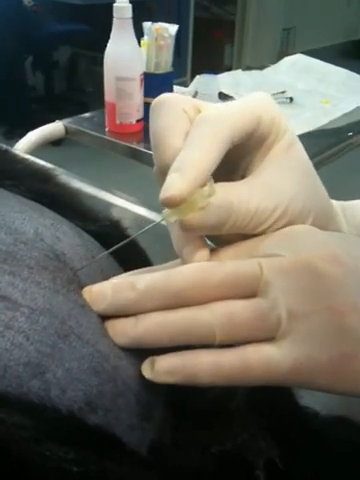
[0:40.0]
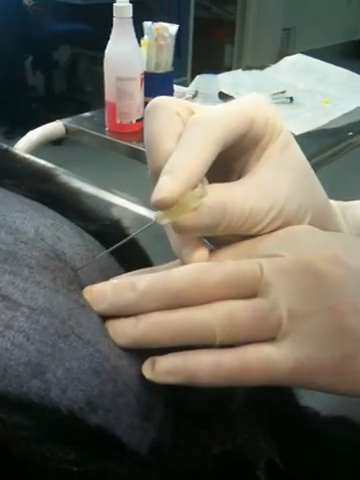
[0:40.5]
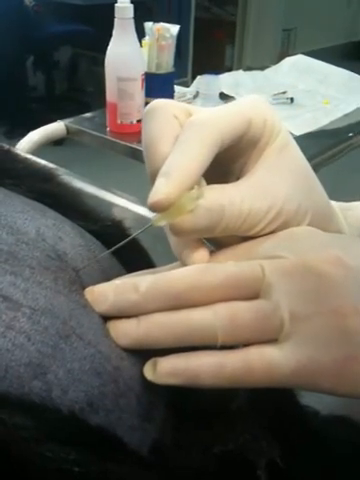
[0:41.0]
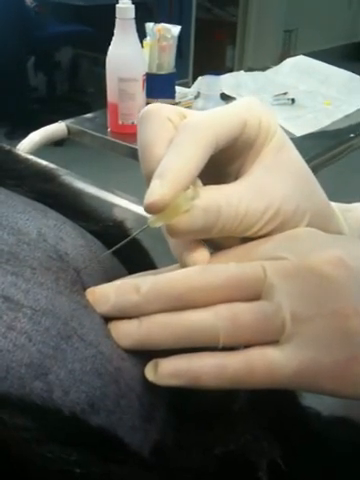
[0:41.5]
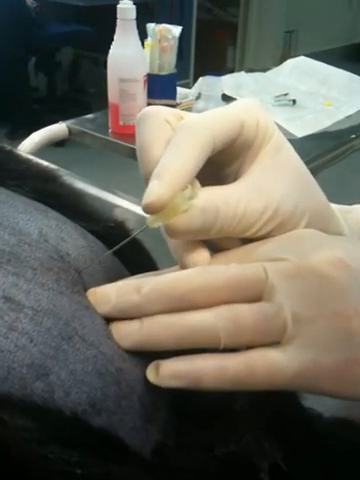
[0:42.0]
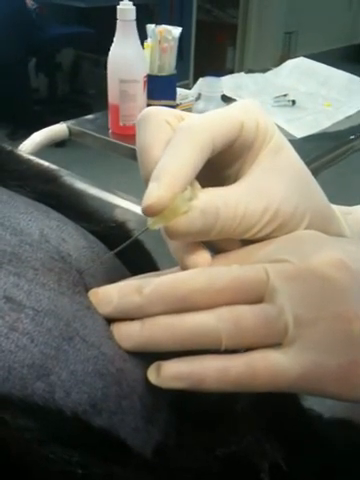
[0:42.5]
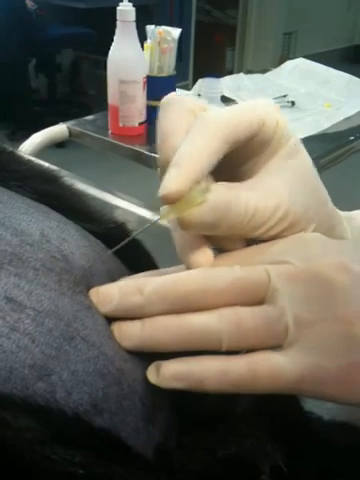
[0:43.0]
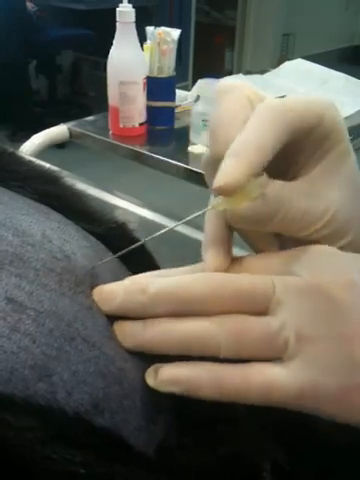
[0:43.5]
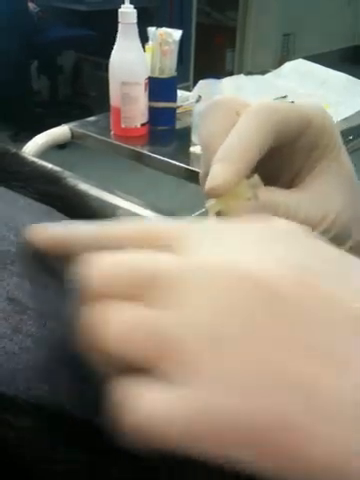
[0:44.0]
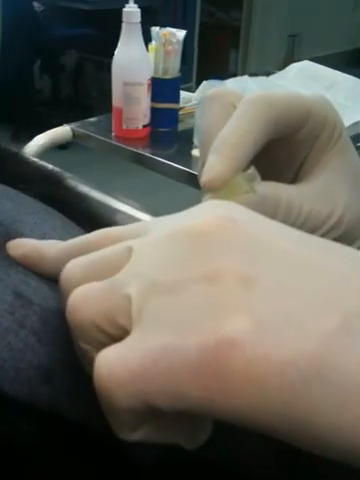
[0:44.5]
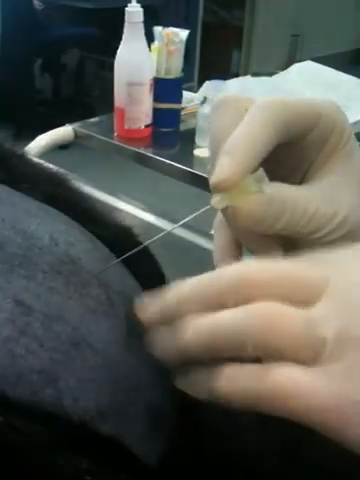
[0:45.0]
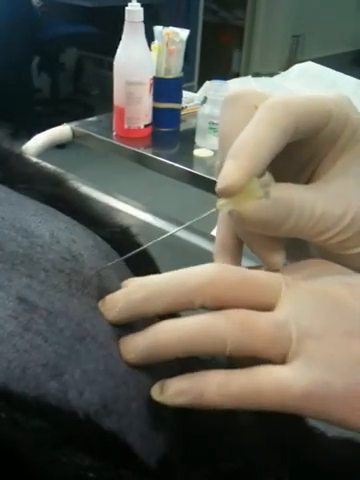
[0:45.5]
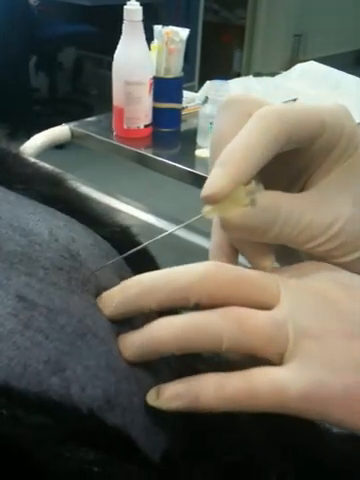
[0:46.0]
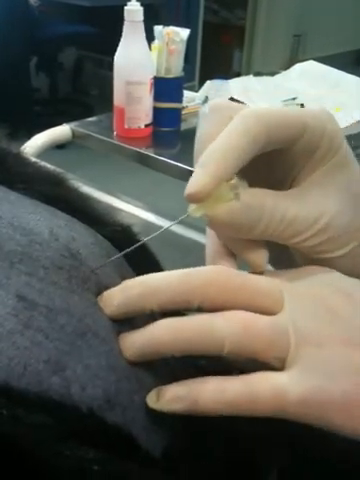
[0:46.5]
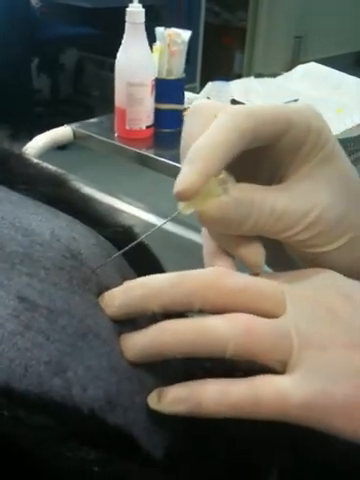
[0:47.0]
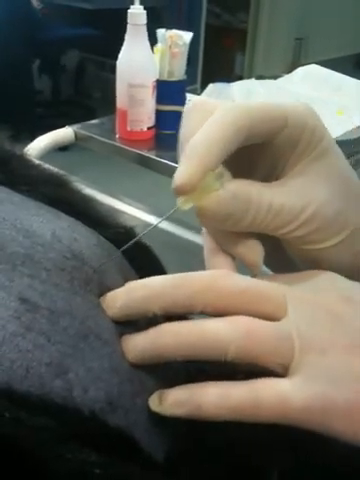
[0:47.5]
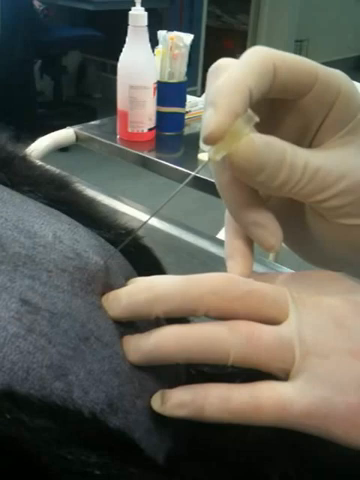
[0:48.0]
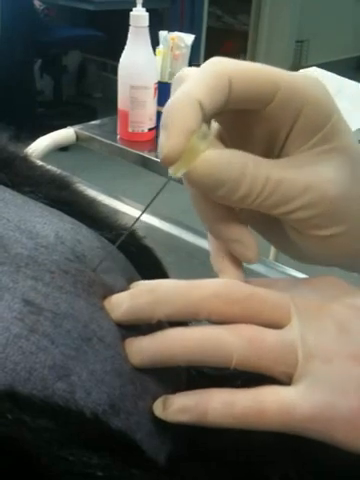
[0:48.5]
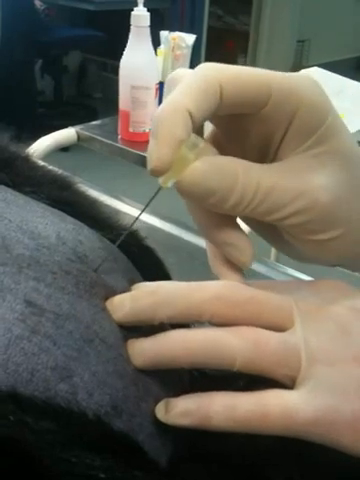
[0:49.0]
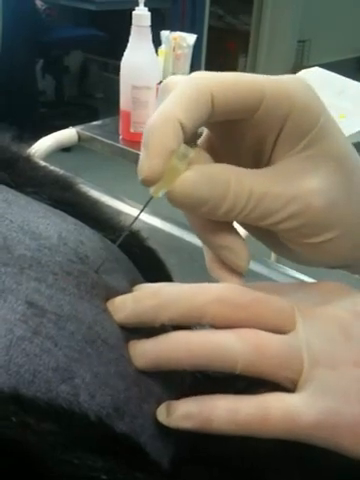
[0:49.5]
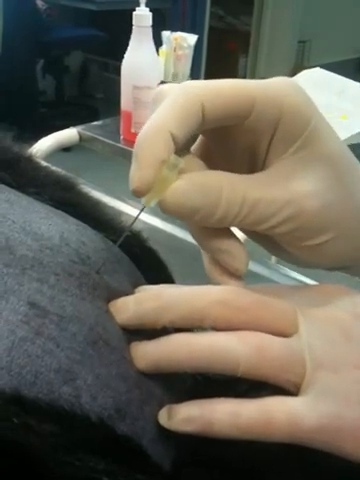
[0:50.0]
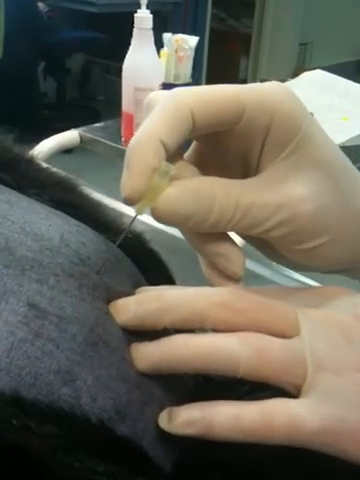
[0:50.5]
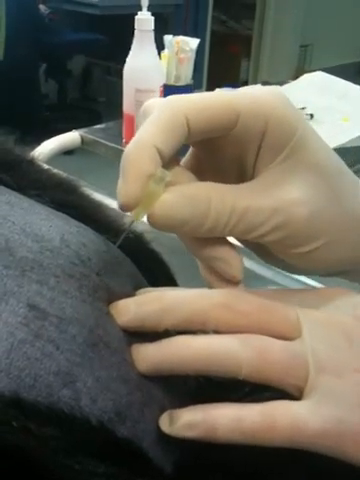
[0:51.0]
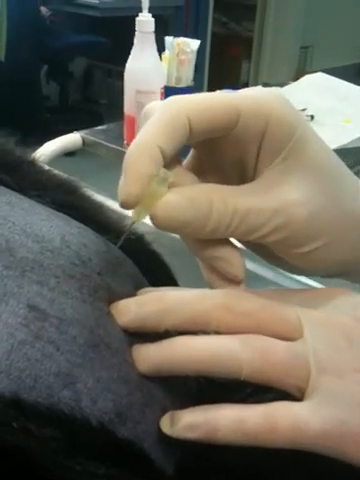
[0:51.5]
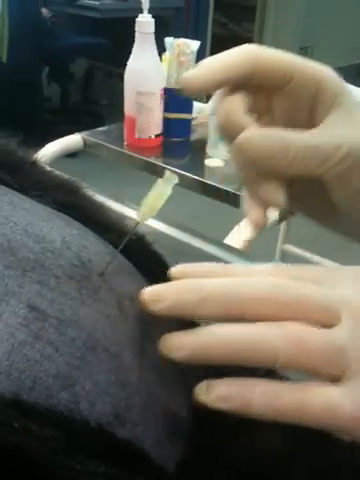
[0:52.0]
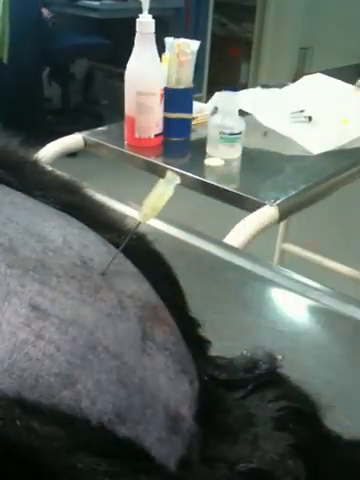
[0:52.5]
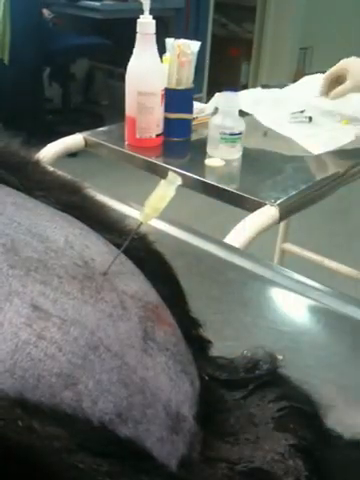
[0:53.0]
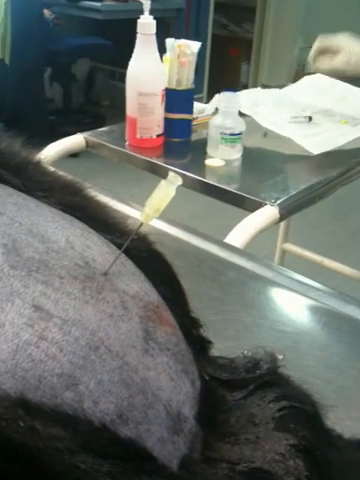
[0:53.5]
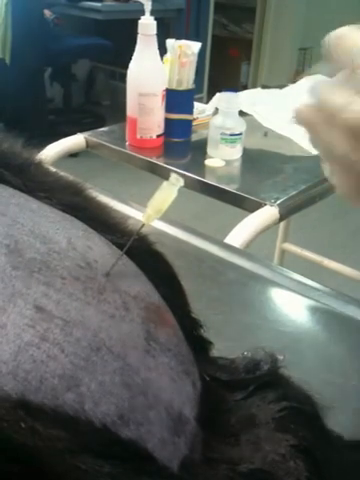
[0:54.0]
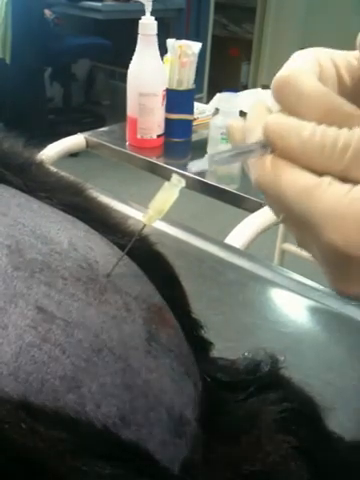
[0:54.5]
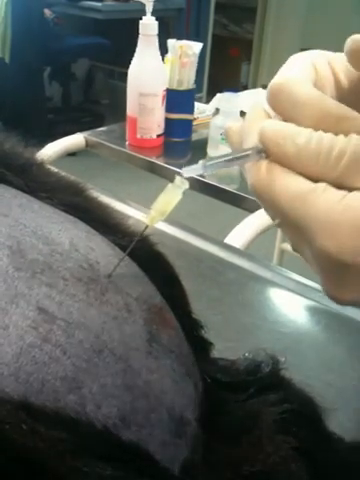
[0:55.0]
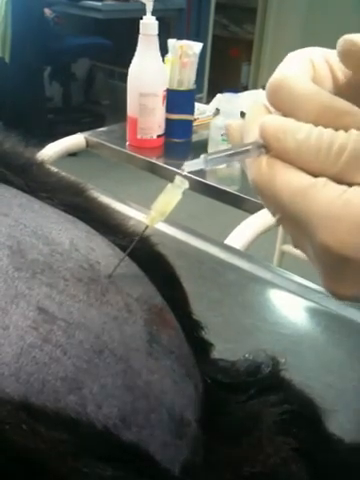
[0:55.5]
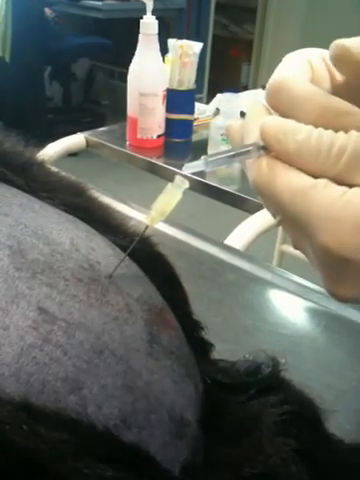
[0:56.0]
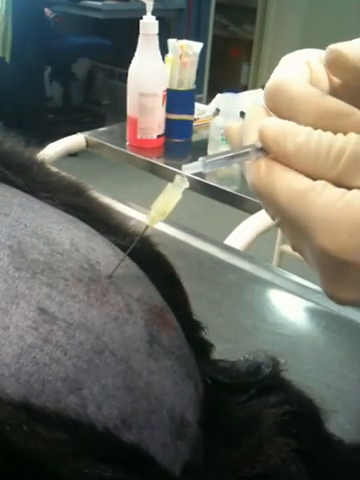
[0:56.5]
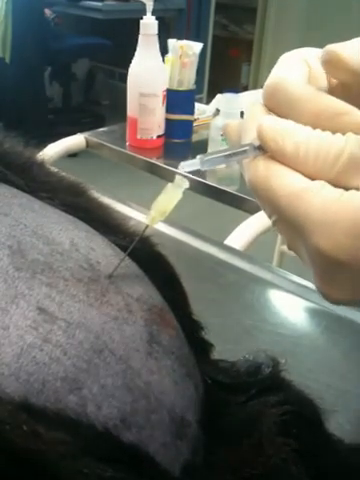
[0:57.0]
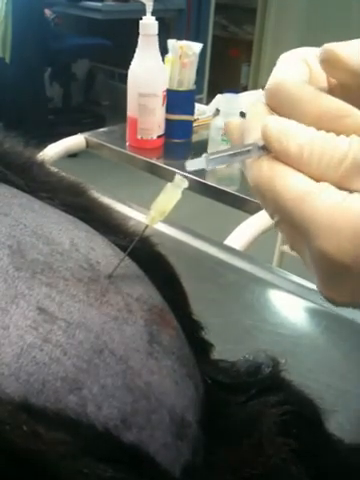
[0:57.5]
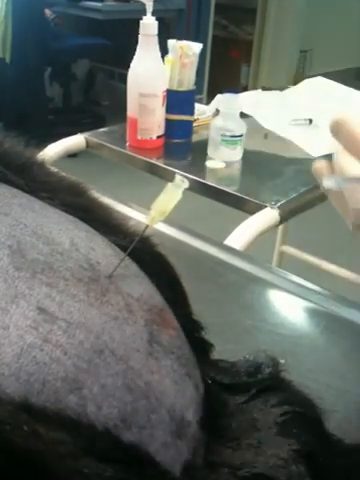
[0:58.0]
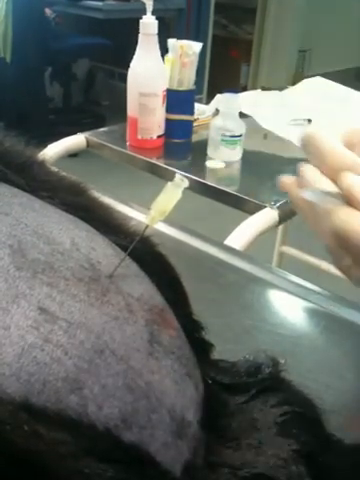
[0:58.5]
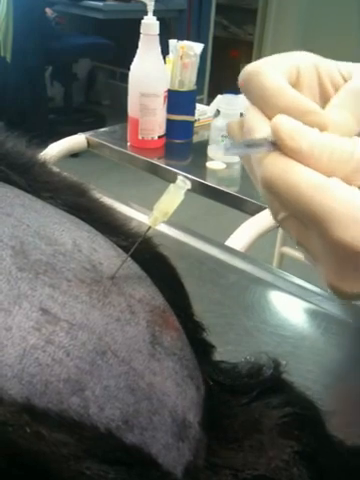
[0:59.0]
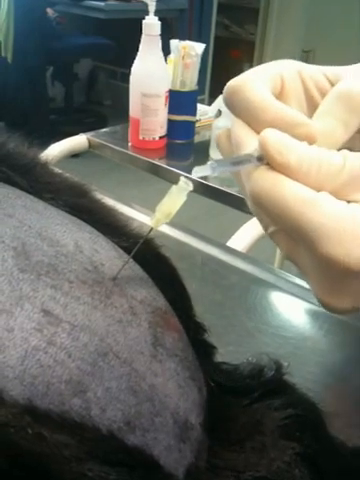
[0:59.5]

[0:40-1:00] A needle is inserted into a shaven section of a dog's rear quarters as the dog is on a table in a veterinary surgery. At the top of the screen is a trolley with various implements and a bottle of pink liquid. With gloved hands, the vet moves the needle, inserts it deeper into the animal and retracts it, then pushes with the other fingers of the left hand while inserting the needle once more. The vet does this in several places within the same area. The vet then inserts the needle until about an inch of metal is exposed before the plastic handle and steps away from the table. At the trolley, the vet gets a pipette of clear liquid, places it into the top plastic part of the needle end, puts in about six drops and then adds some more drops.